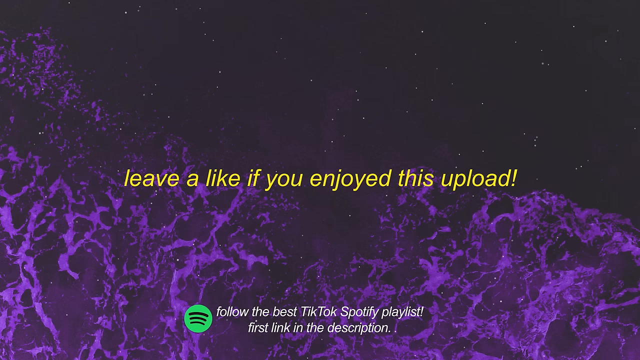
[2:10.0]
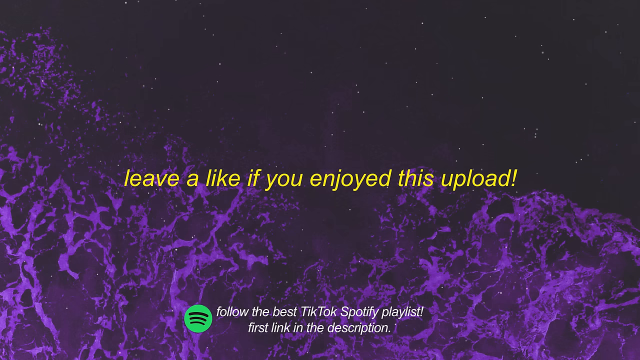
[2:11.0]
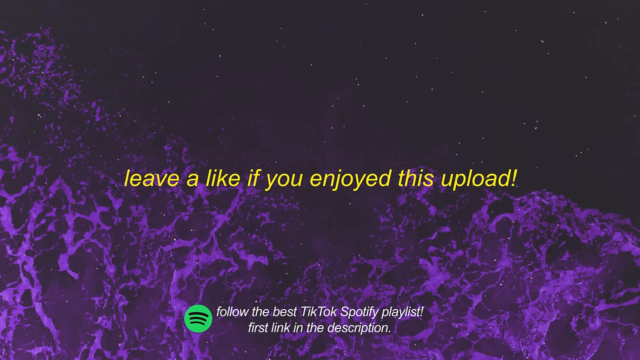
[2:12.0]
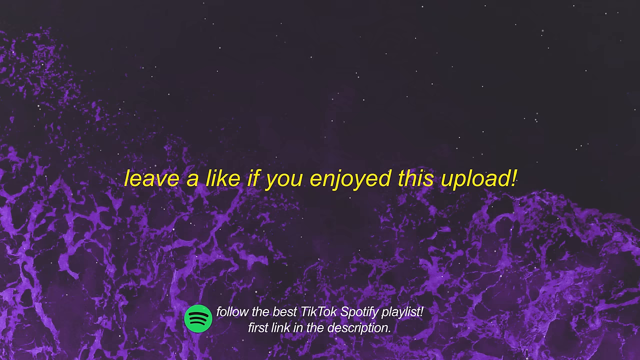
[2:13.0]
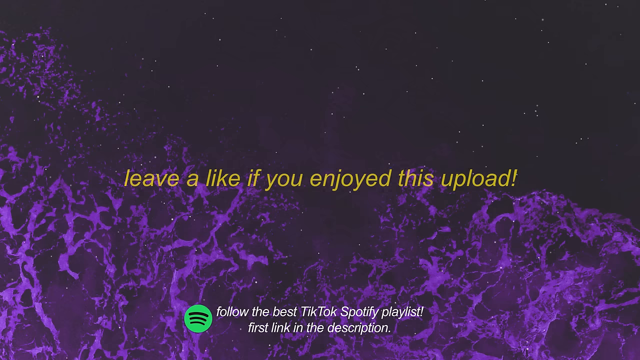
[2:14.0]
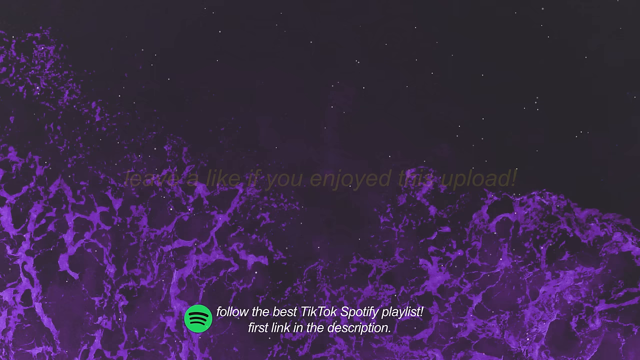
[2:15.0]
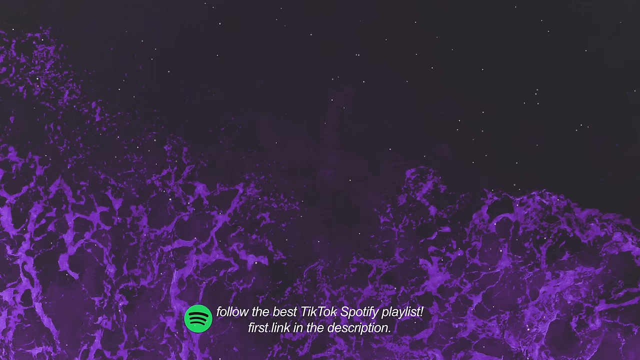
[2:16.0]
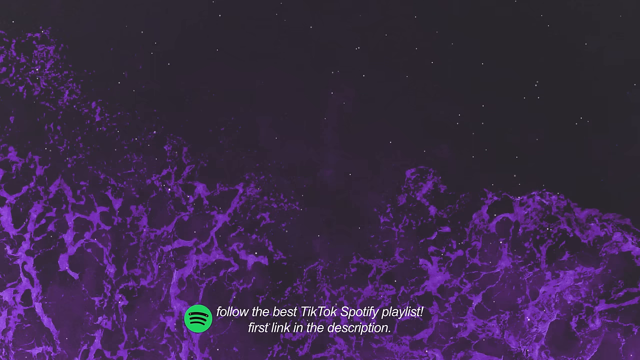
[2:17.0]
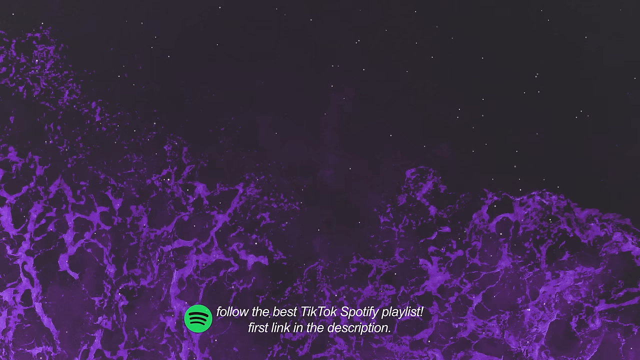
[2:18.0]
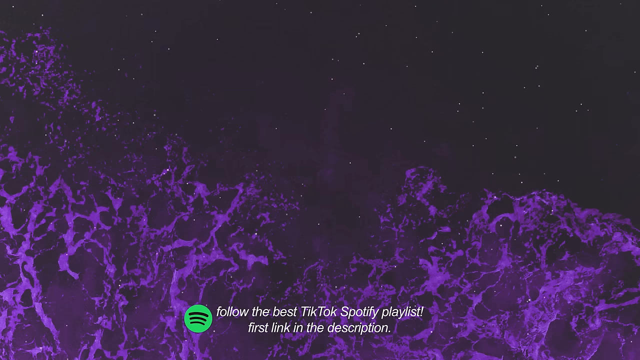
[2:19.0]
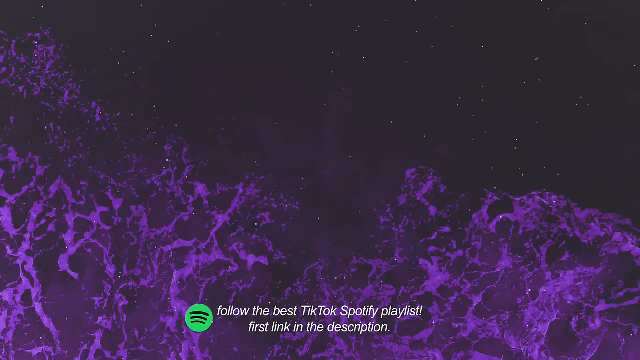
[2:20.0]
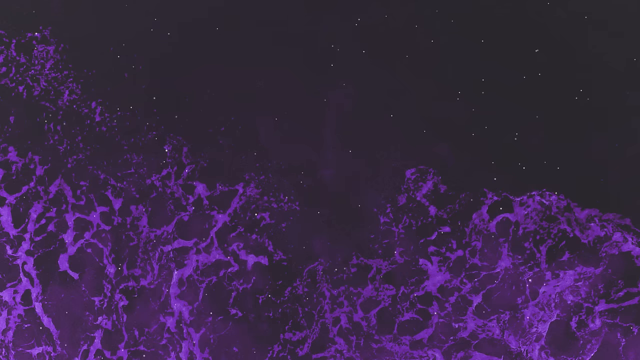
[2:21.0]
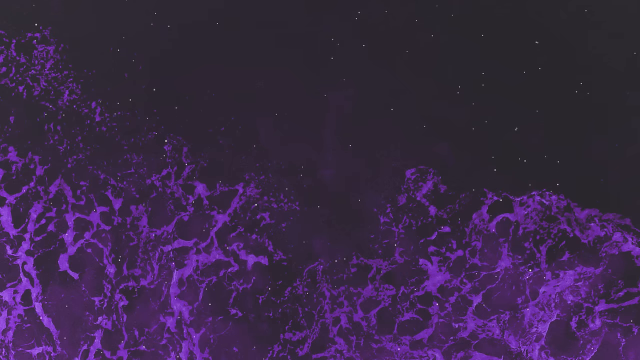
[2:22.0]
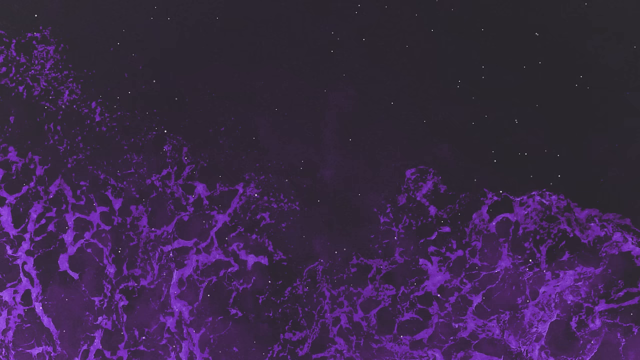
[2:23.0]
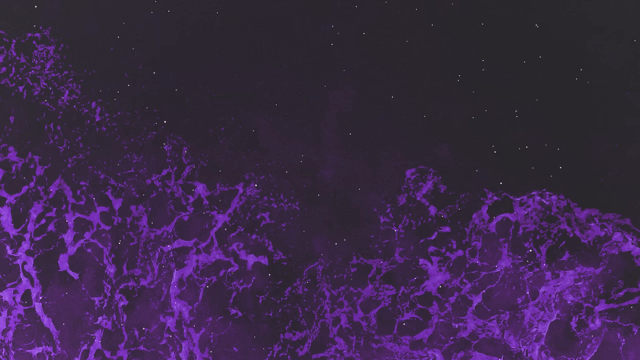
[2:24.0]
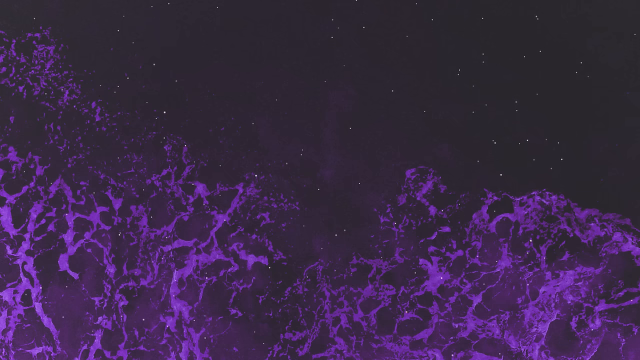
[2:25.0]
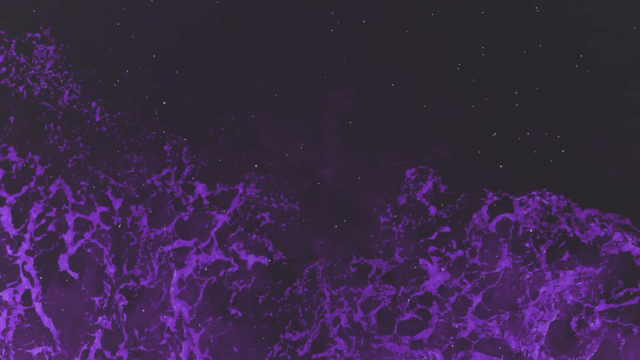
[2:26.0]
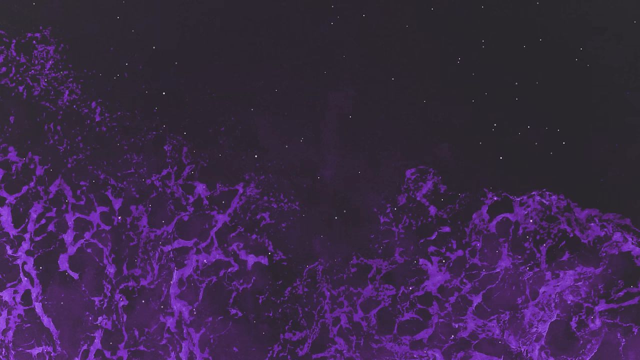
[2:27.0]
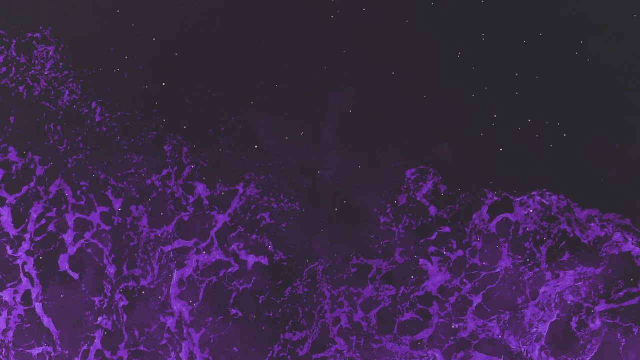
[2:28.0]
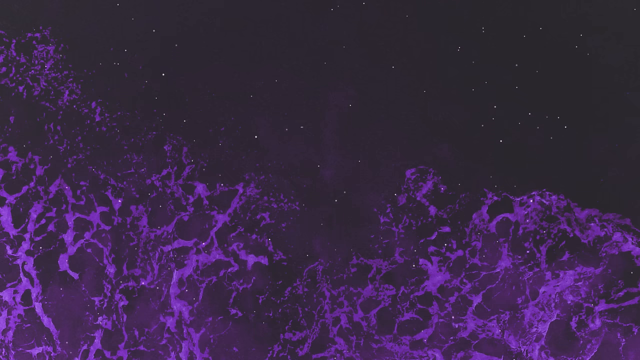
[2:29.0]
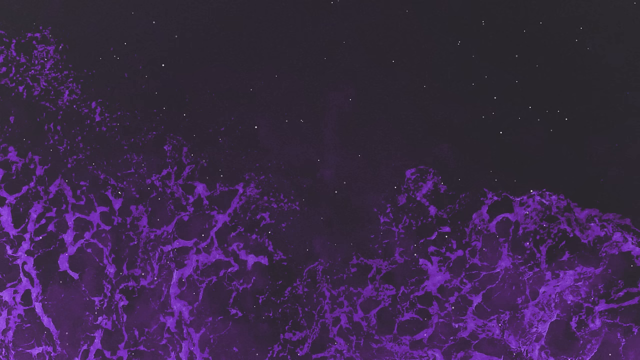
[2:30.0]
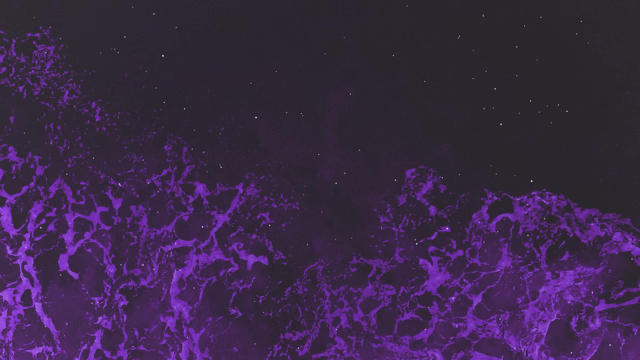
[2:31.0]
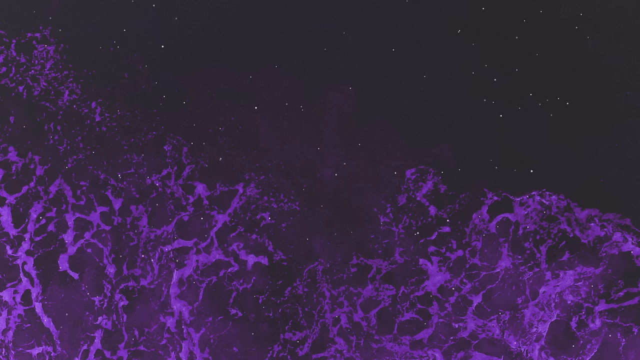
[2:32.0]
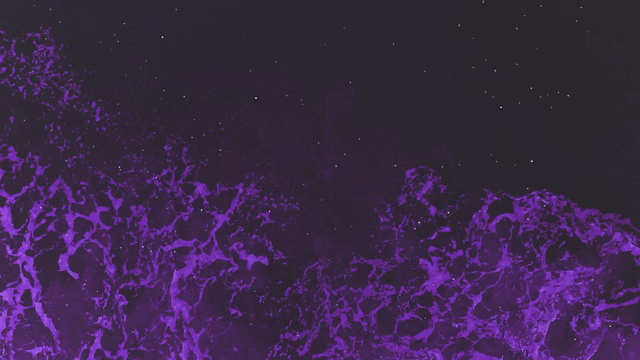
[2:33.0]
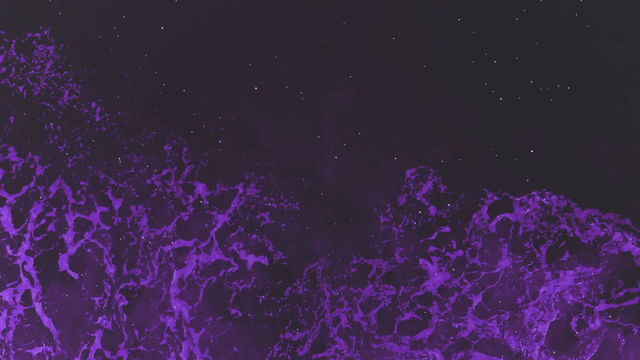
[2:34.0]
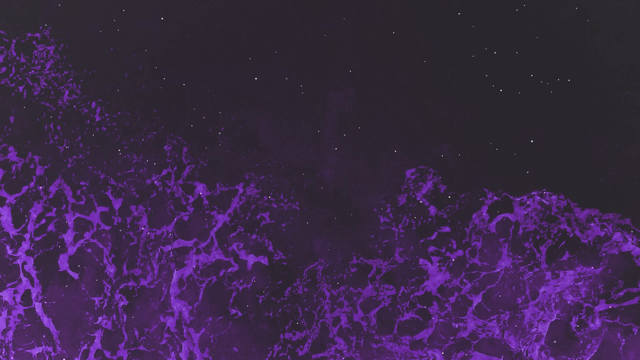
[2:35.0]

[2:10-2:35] The song reaches its end, and the text says "leave a like if you enjoyed this upload and follow the best tiktok spotify playlist." The whole background is black, with waves that kind of fill the area. The waves are a kind of purplish, foamy color; in the distance they almost look like they could be the sky, with speckled white in the background, though they also look like waves or could be mountains.